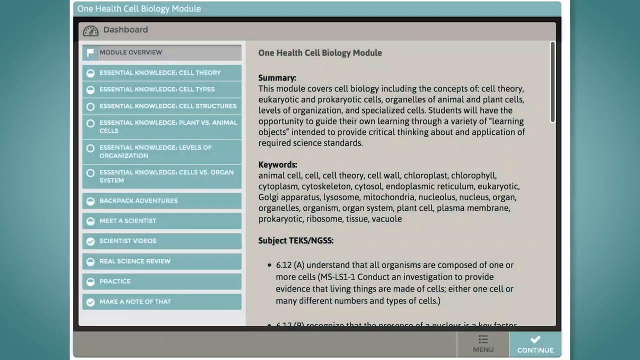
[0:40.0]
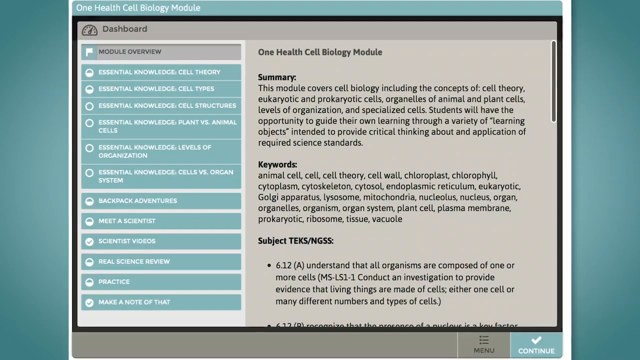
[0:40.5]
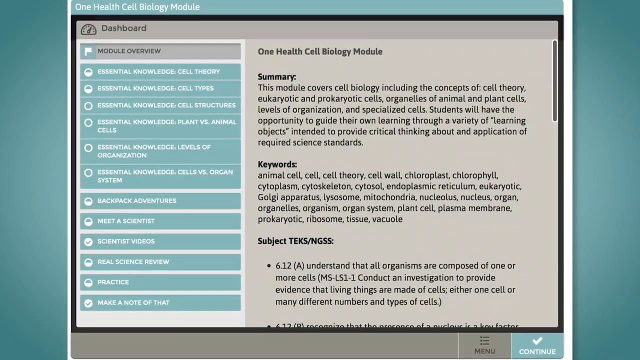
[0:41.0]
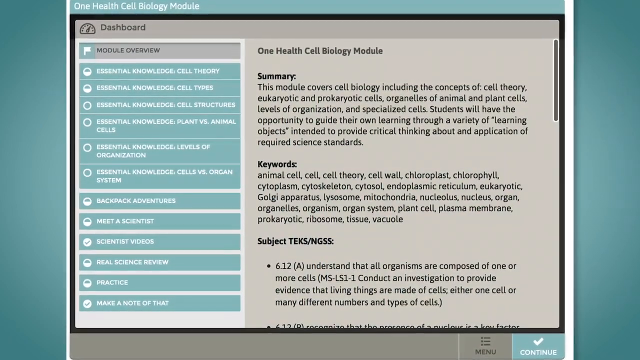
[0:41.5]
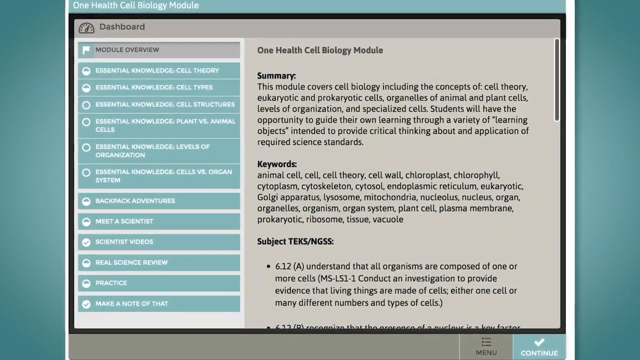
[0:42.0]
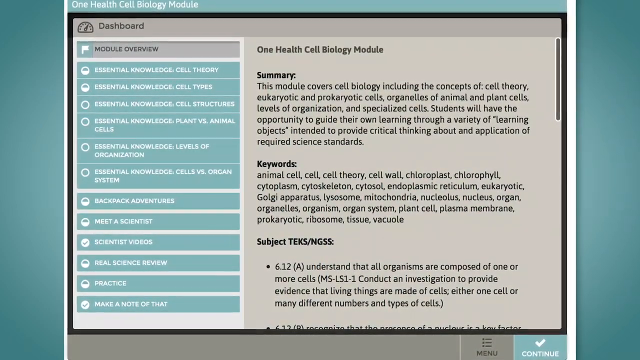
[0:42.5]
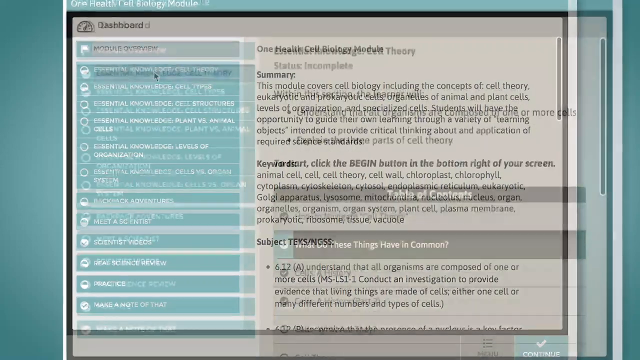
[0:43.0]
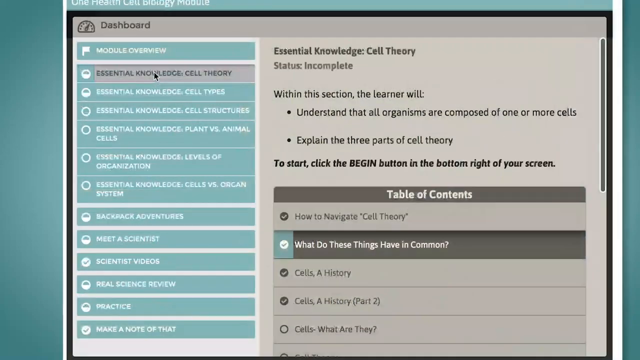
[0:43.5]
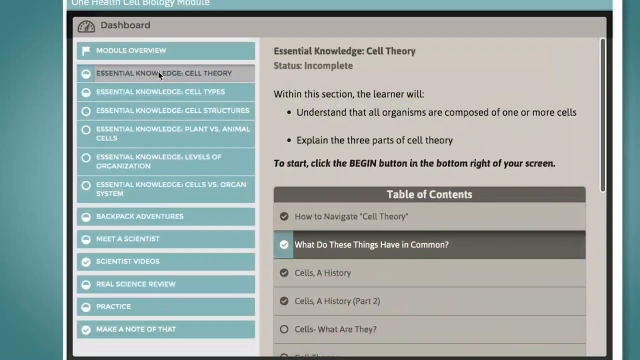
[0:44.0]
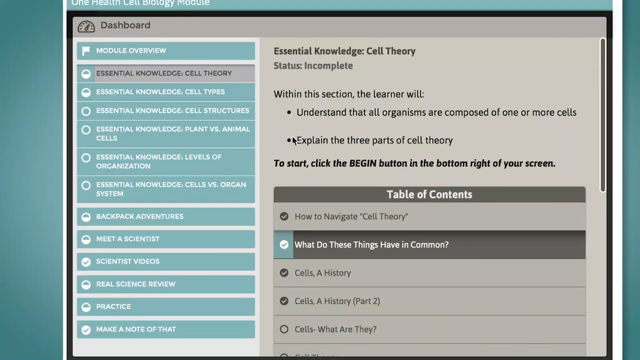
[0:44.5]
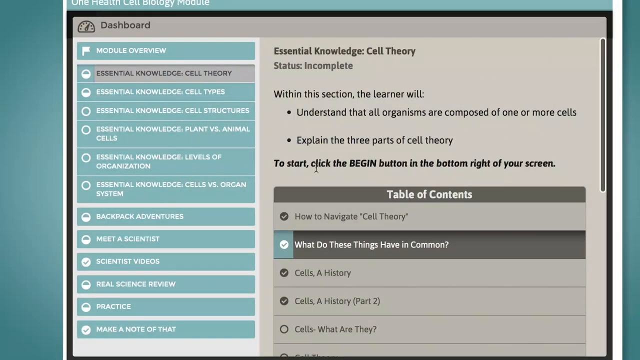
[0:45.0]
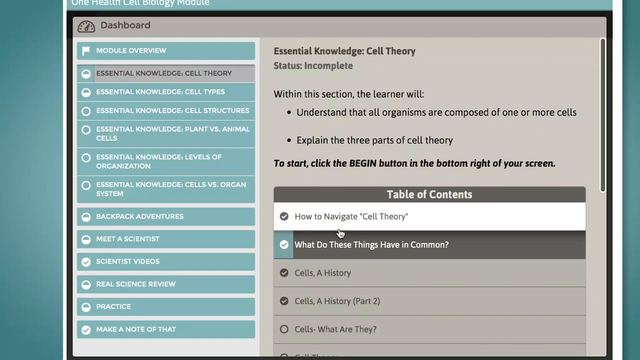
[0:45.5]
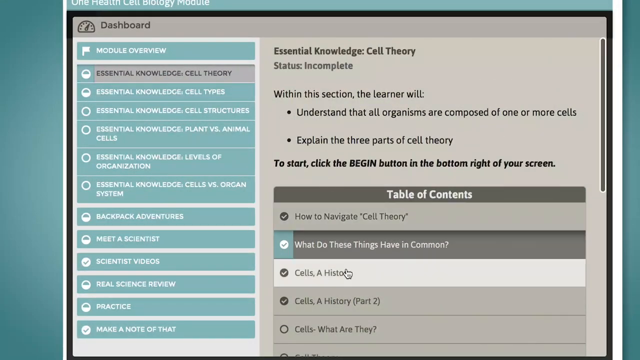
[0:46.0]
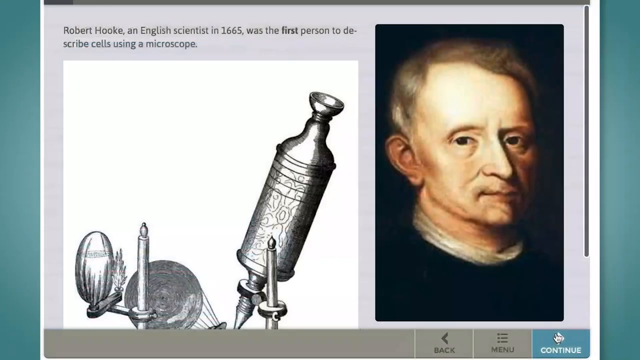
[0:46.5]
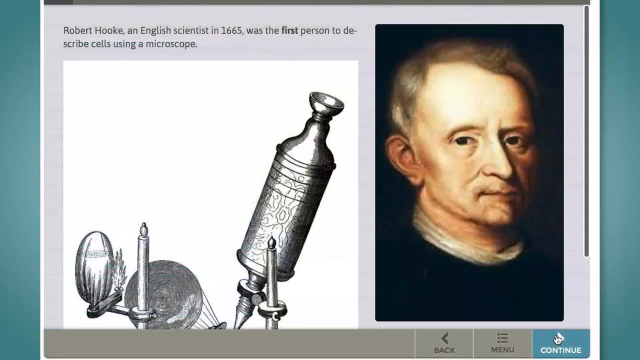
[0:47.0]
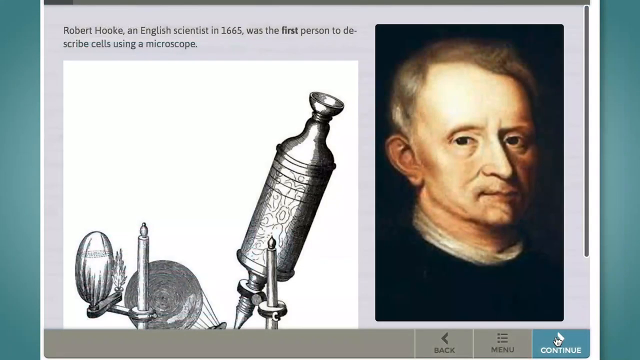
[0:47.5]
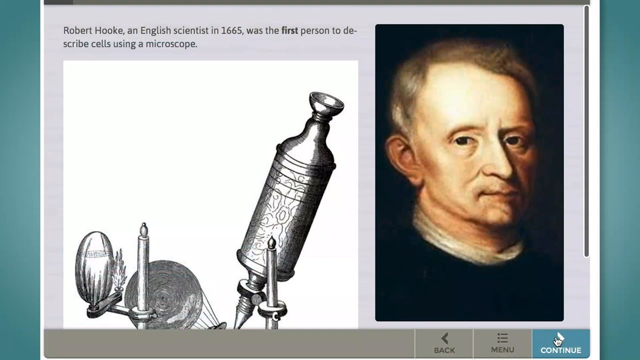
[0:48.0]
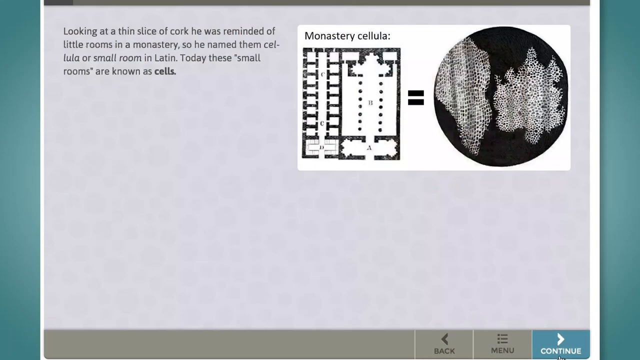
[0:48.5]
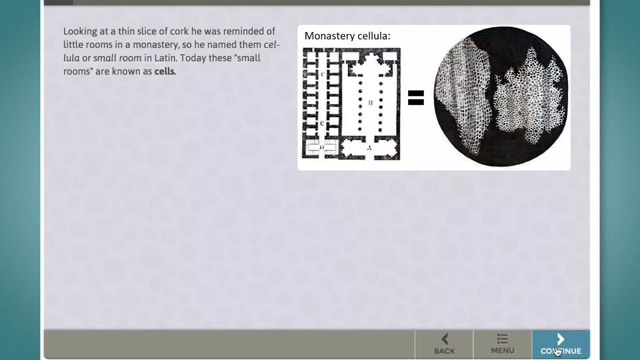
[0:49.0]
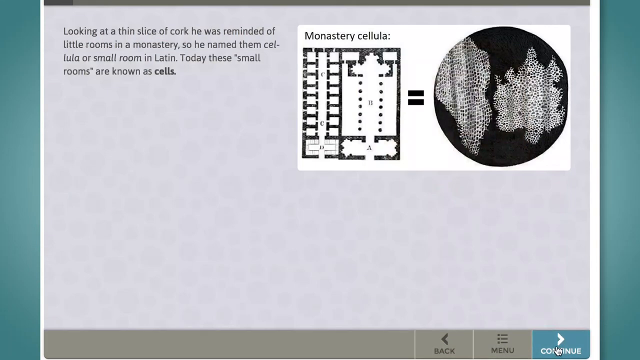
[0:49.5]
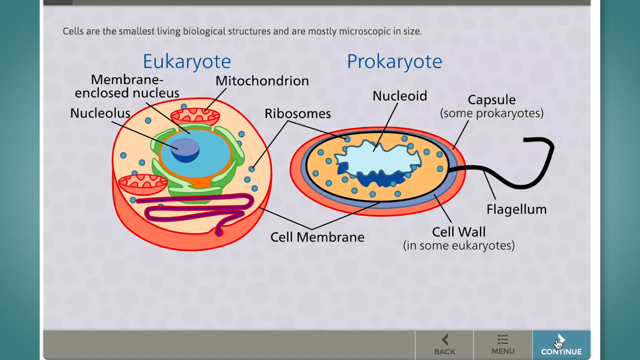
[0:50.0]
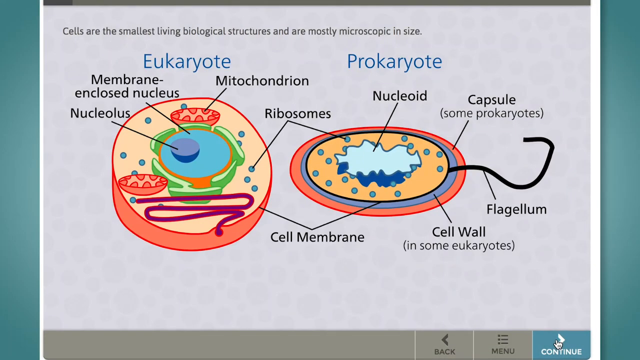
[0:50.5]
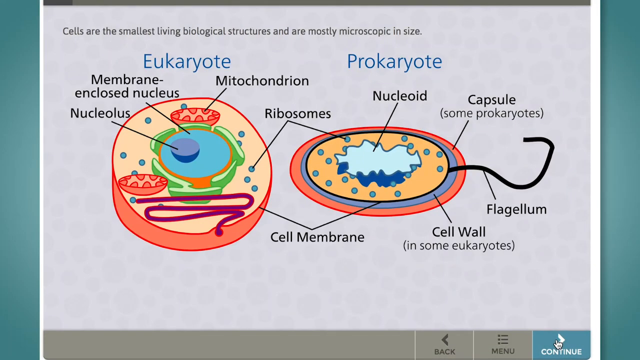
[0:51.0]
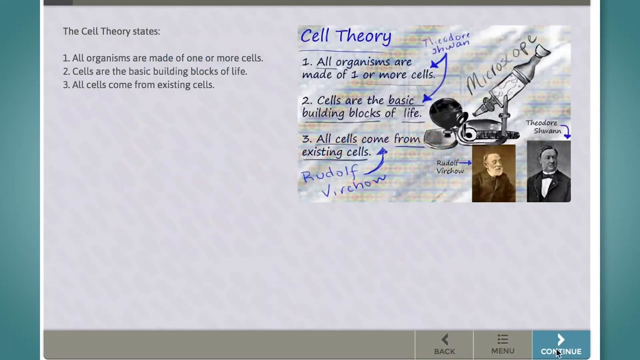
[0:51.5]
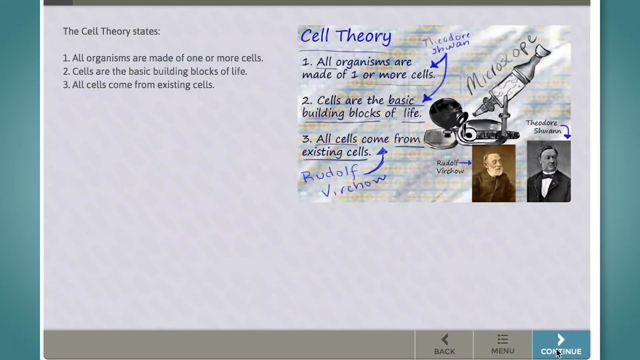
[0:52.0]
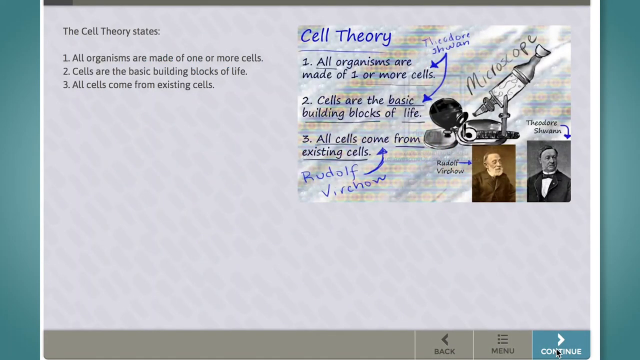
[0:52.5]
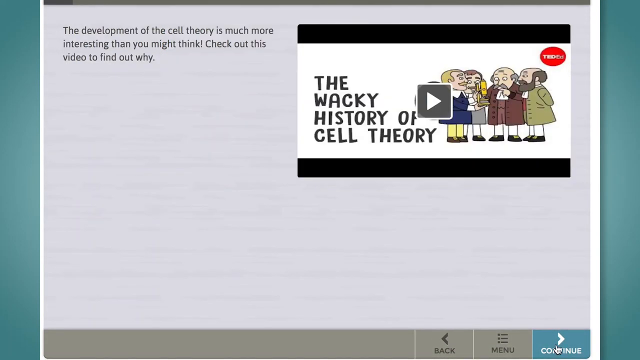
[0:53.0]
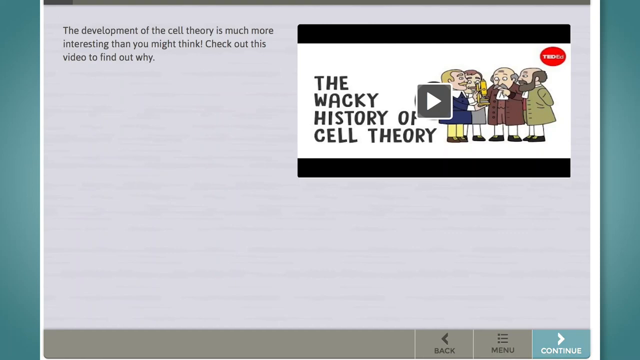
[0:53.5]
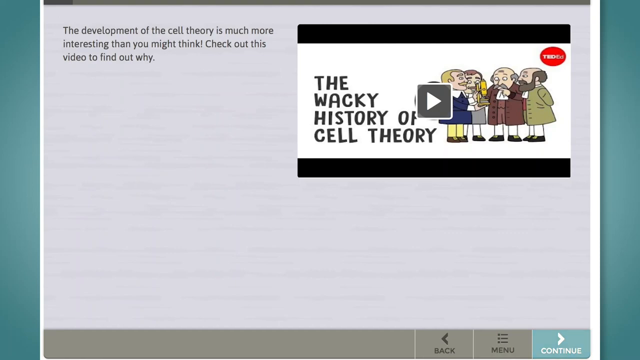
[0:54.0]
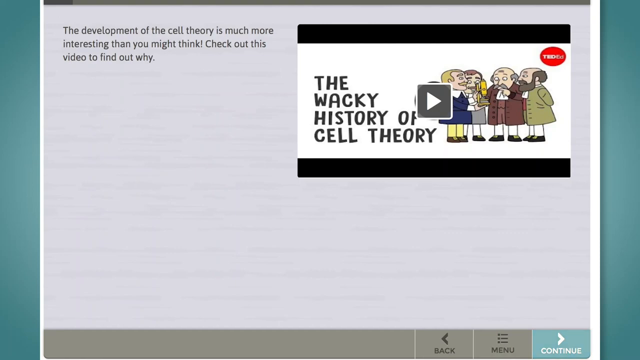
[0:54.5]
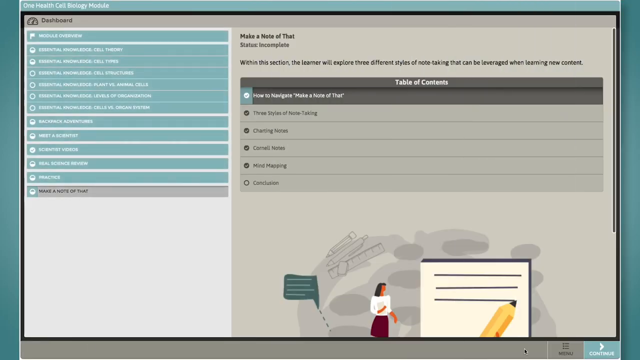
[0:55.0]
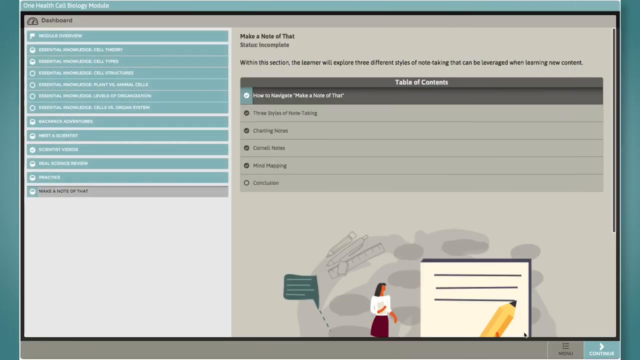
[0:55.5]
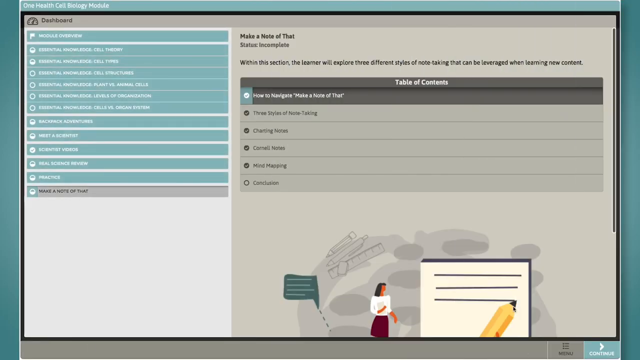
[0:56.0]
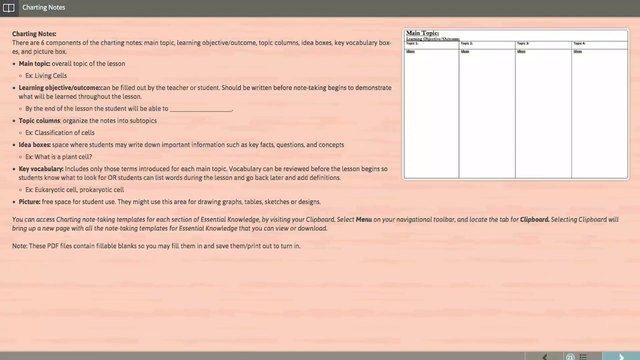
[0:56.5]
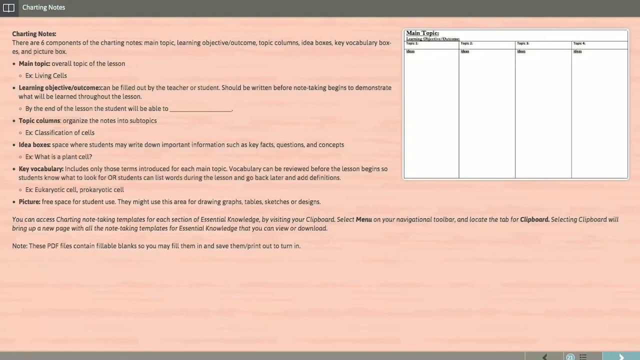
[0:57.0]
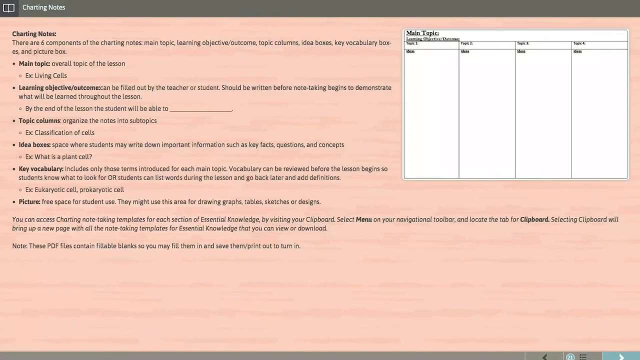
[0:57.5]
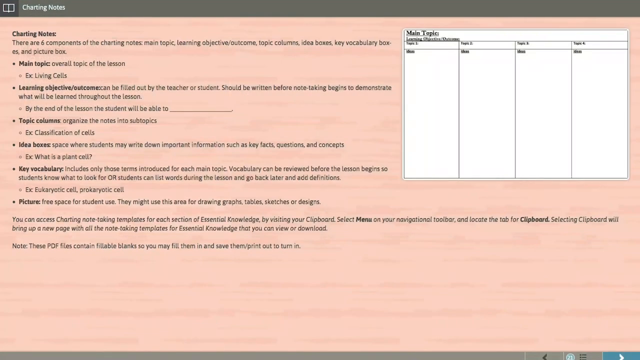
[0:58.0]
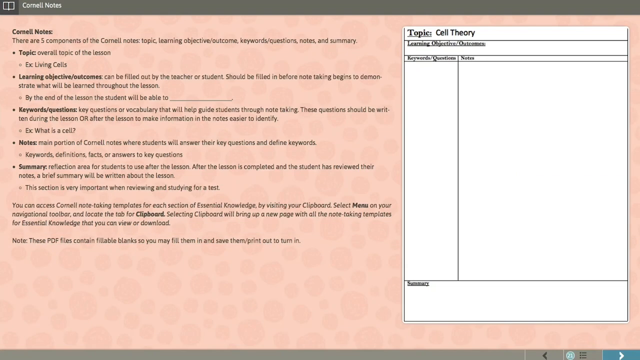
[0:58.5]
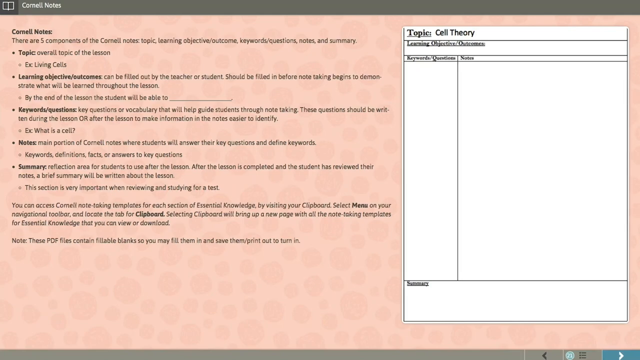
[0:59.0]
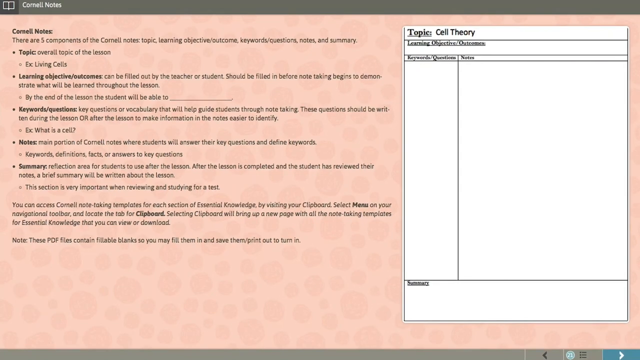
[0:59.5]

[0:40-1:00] The dashboard of the One Health Cell Biology module is shown. On the left is a module overview with green tabs and white writing; on the right, the background is a sort of beige-gray color with black text showing the summary, keywords and subjects of the module. The page scrolls up and down, and then the essential knowledge cell theory module is chosen. Images from this module include one of Robert Hooke, an English scientist, and an early microscope looking at a diagram, with text explaining that a thin slice of cork reminded him of little rooms in a monastery, so he named them cellular, or small rooms in Latin, and that today these small rooms are known as cells. The next diagram shows cells, labeled and in color, with black labels; text across the top reads "cells are the smallest living biological structure and are mostly microscopic in size." Some cell theory information follows, then a video called the wacky history of cell theory, with text on the left saying "check out this video to find out why." The view returns to the cell module, and then to notes.